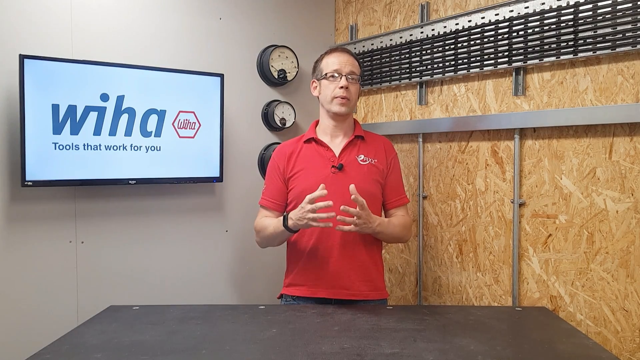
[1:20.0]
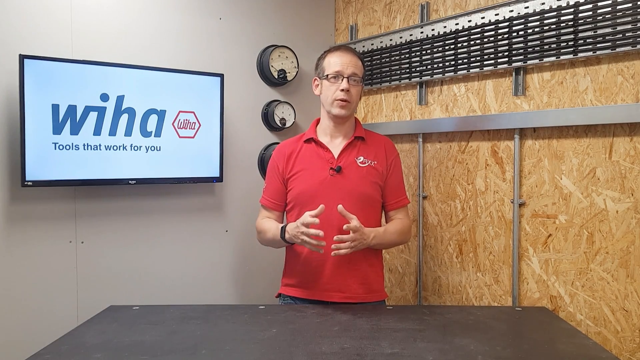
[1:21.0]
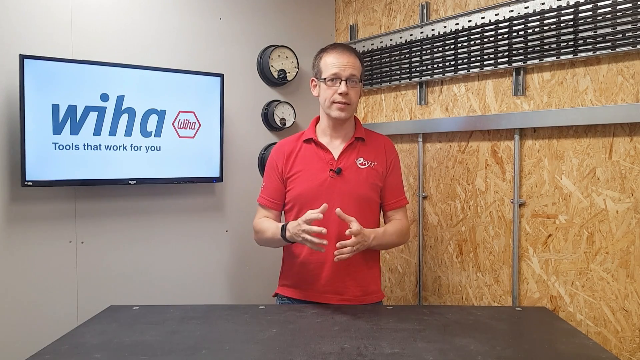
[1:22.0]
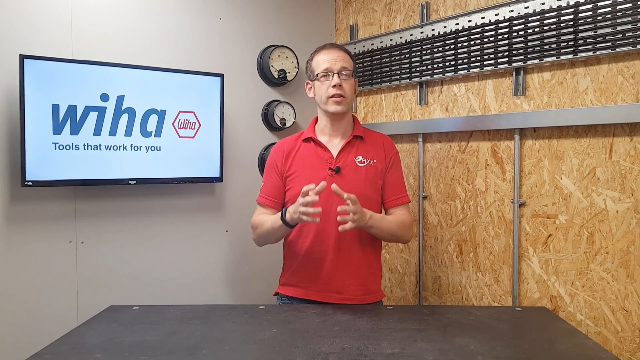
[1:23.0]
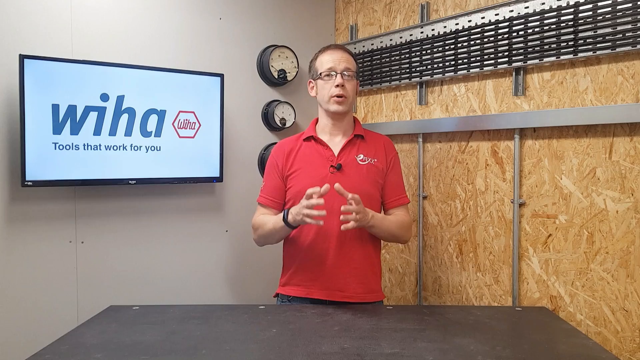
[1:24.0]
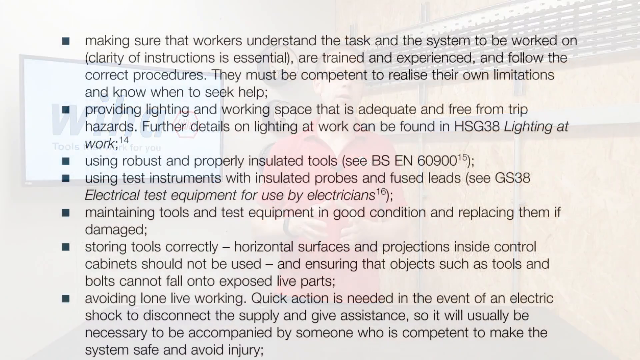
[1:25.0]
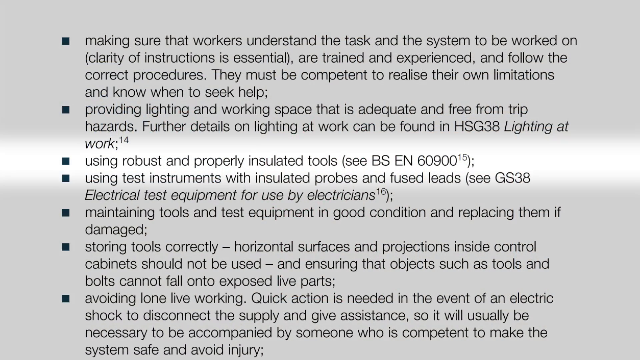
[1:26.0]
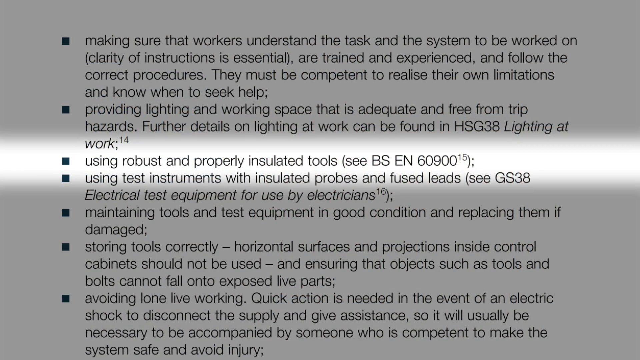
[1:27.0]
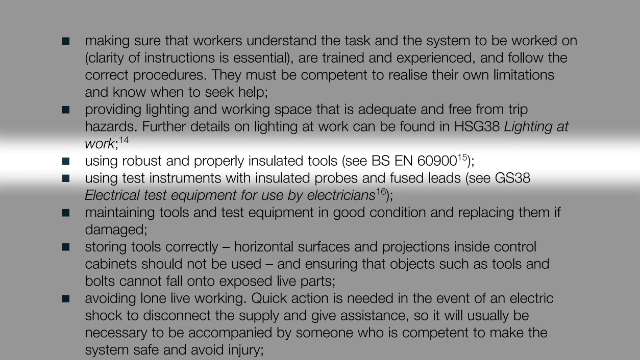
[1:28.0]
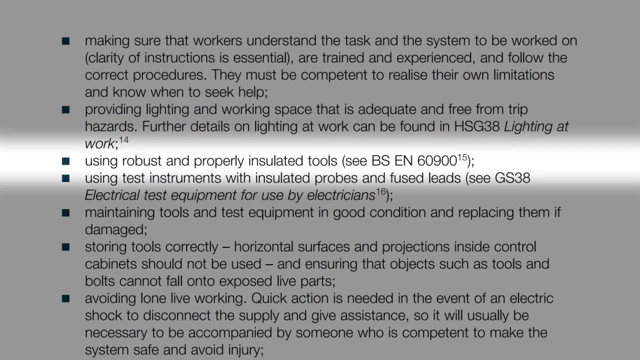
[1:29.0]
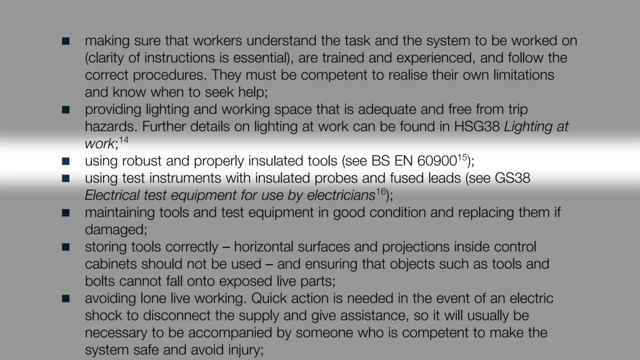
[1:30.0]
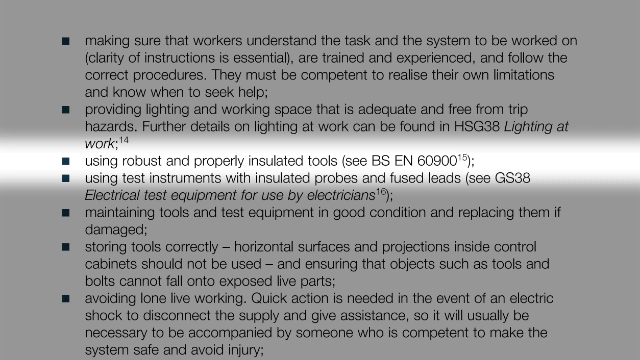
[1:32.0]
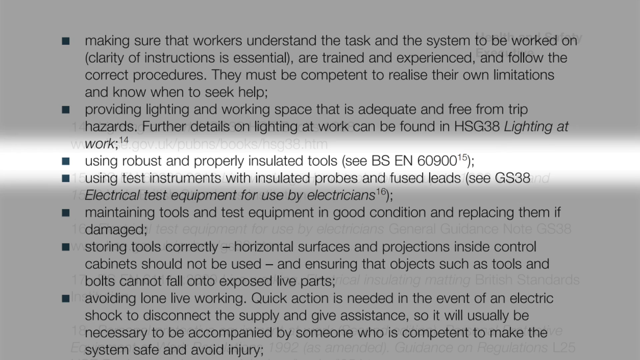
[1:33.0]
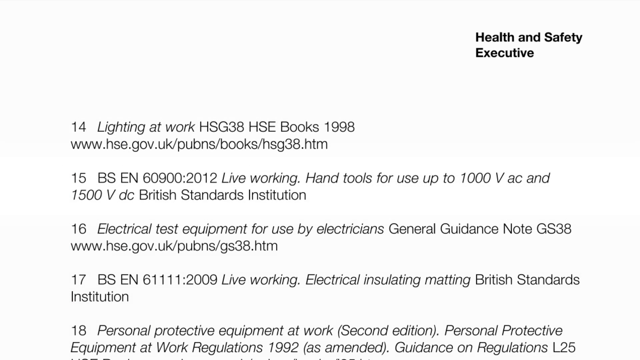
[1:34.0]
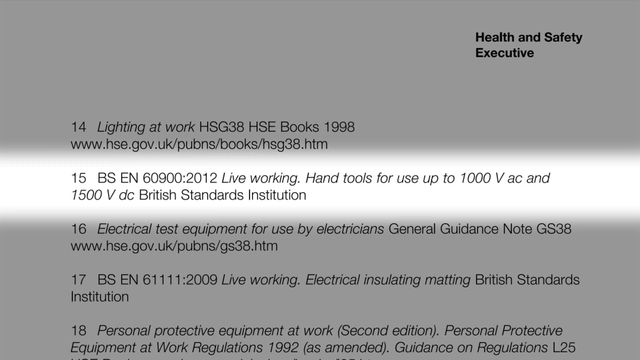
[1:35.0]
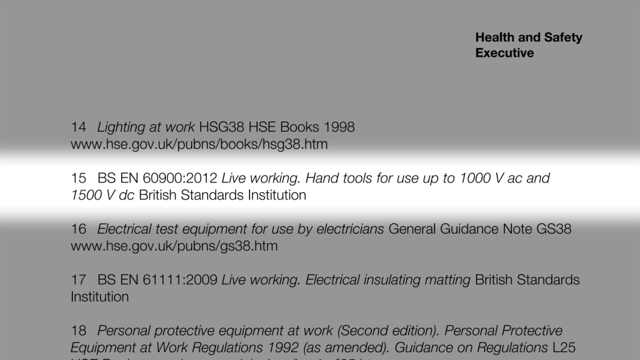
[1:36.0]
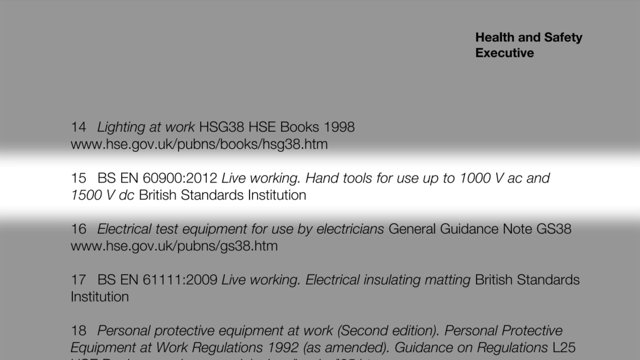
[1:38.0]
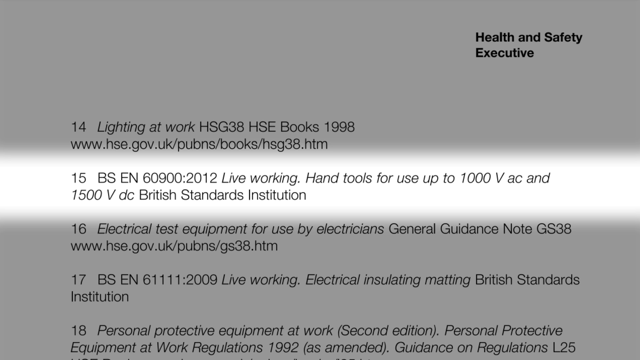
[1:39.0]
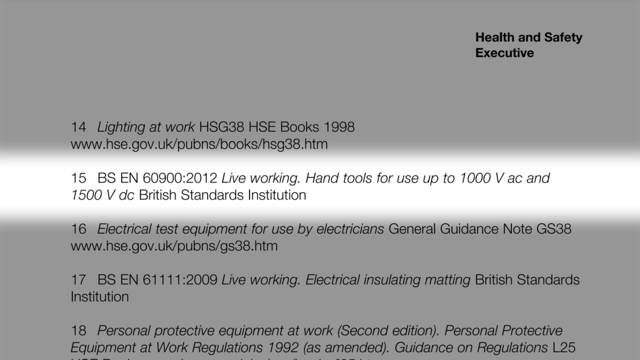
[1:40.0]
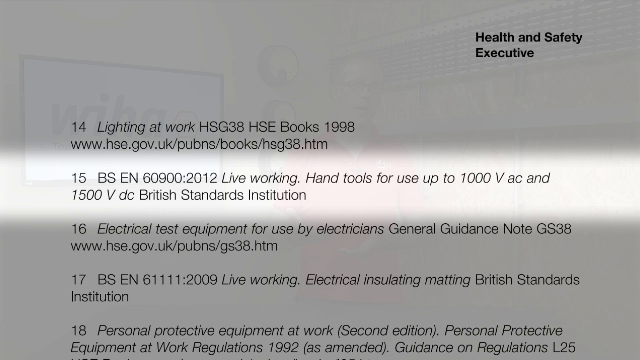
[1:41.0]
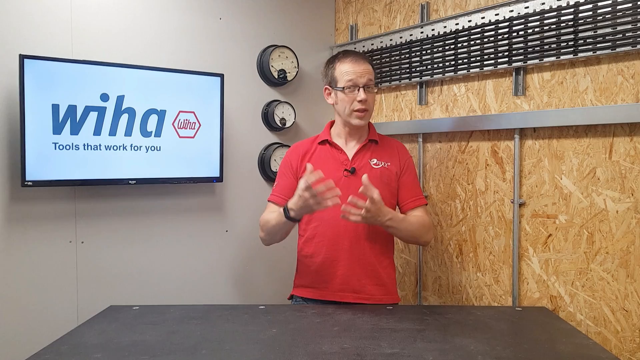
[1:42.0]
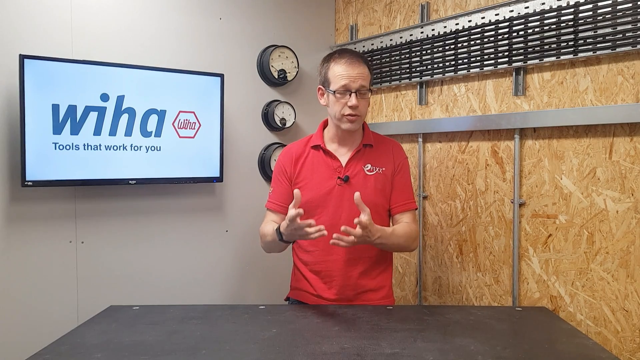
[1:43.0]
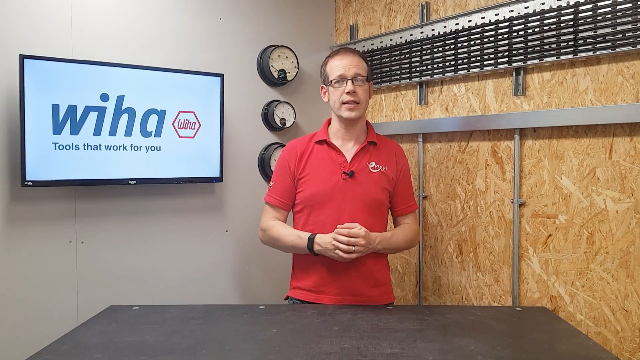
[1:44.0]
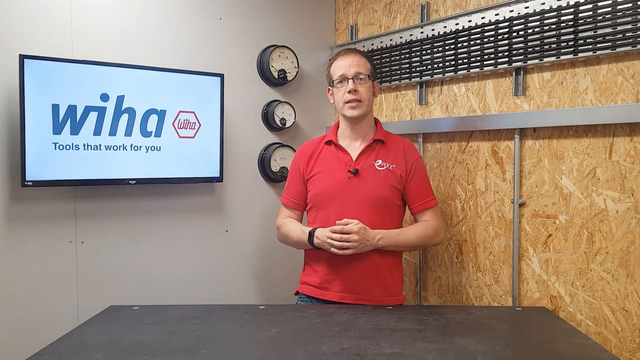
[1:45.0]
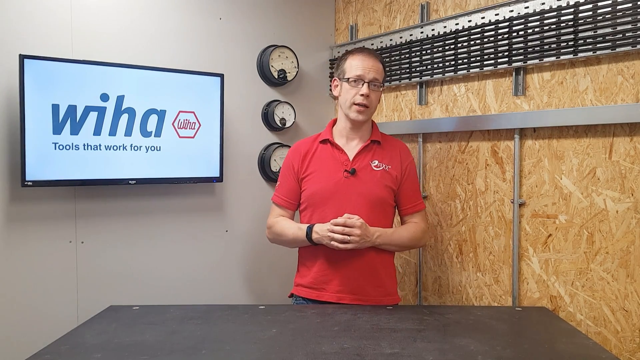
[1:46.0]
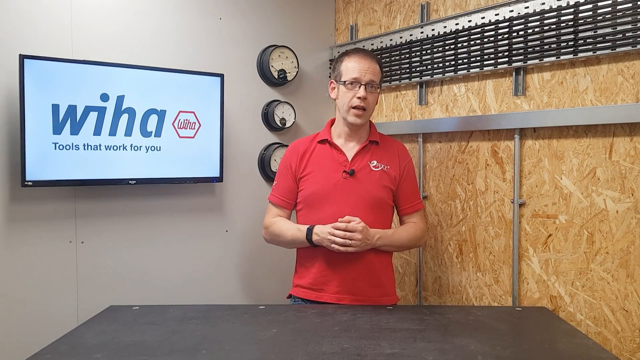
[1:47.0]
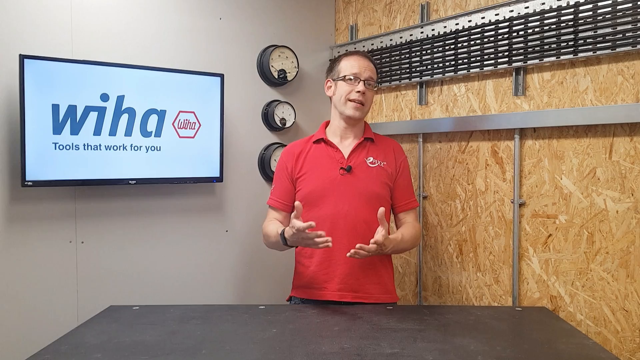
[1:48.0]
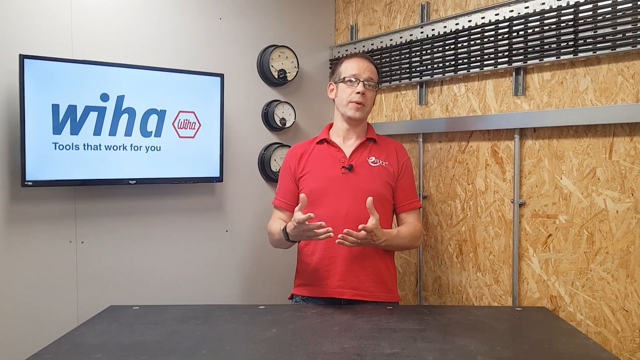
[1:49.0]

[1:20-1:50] The video opens on the man in the red t-shirt from WIHA, then switches to a screen of text listing safety practices, including "making sure that workers understand the task and the system to be worked on. Clarity of instructions is essential," "are trained and experienced, and follow the correct procedures. They must be competent to realize their own limitations and know when to seek help," "Providing lighting and working space that is adequate and free from trip hazards. Further details on lighting at work can be found in HSG38 lighting at work," "Using robust and properly insulated tools," "Using test instruments with insulated probes and fused leads," "Maintaining tools and test equipment in good condition and replacing them if damaged," "Storing tools correctly," "ensuring that objects such as tools and bolts cannot fall into exposed live parts," and "Avoiding lone live work." The next screen shows a couple of citations; the one highlighted in white appears to read "15 BSEN60900:2012 live working hand tools for use up to 1000 volts AC and 1500 volts DC British Standards Institution."